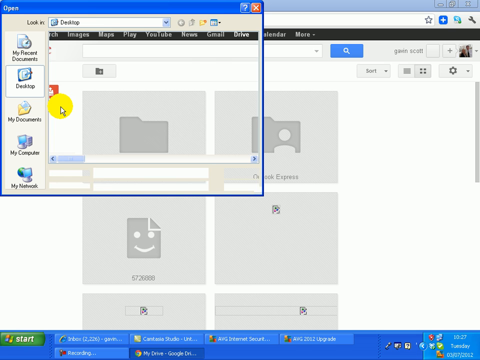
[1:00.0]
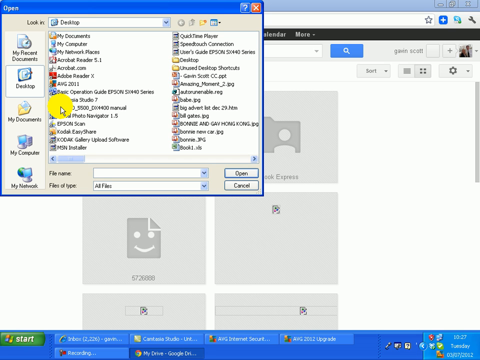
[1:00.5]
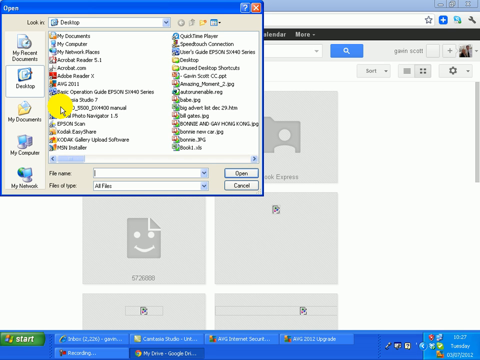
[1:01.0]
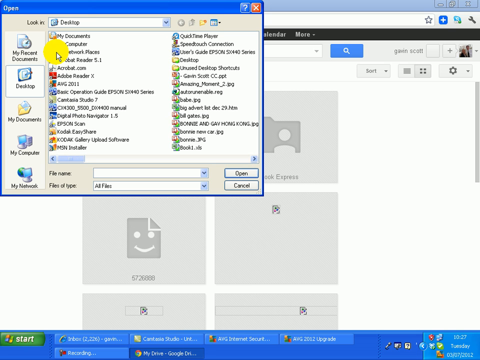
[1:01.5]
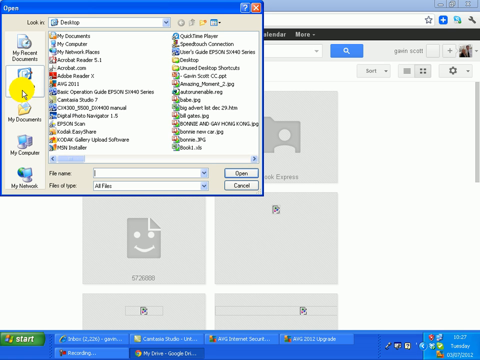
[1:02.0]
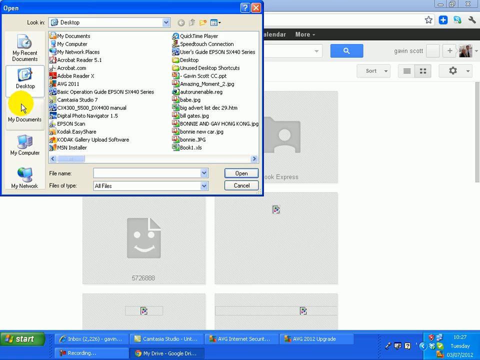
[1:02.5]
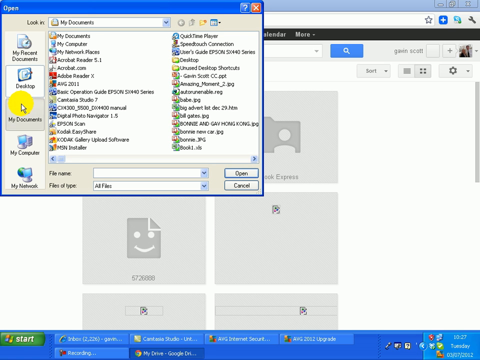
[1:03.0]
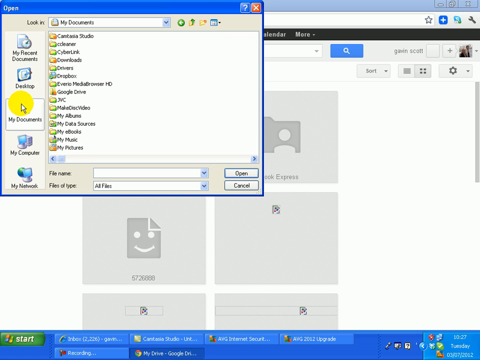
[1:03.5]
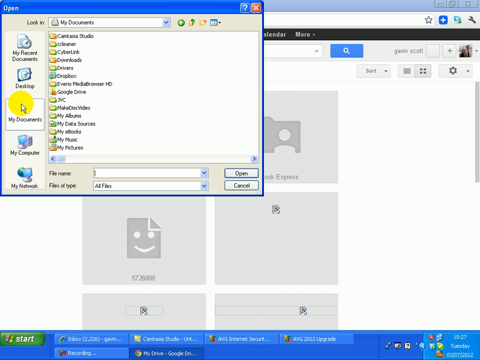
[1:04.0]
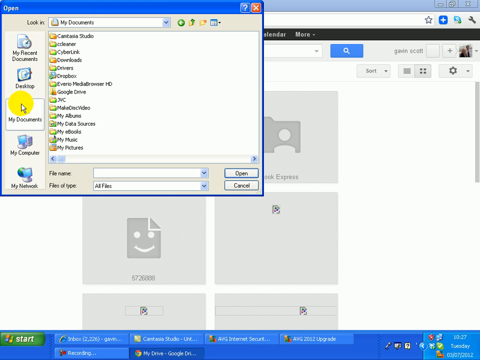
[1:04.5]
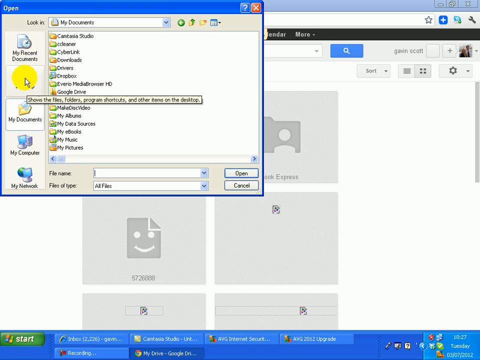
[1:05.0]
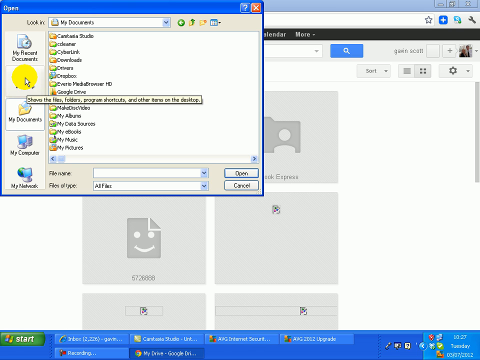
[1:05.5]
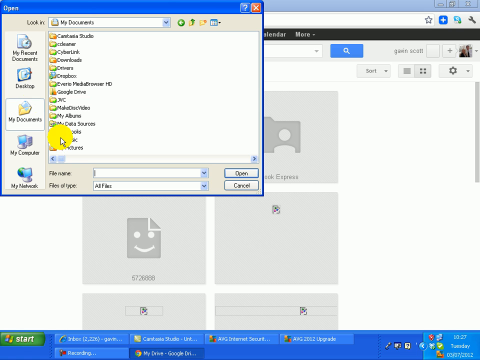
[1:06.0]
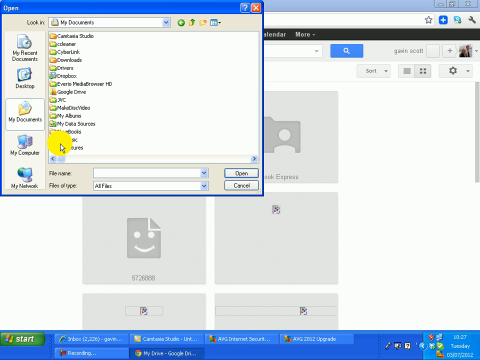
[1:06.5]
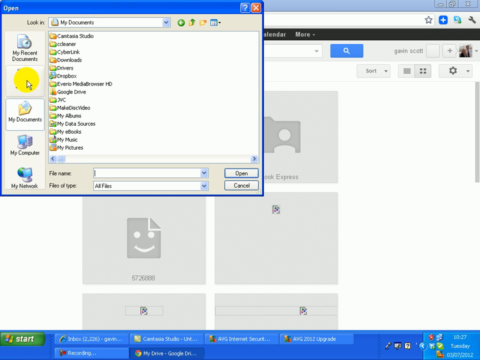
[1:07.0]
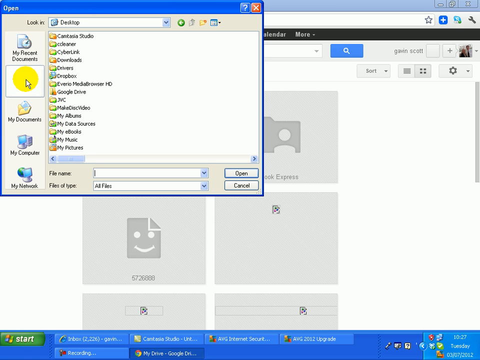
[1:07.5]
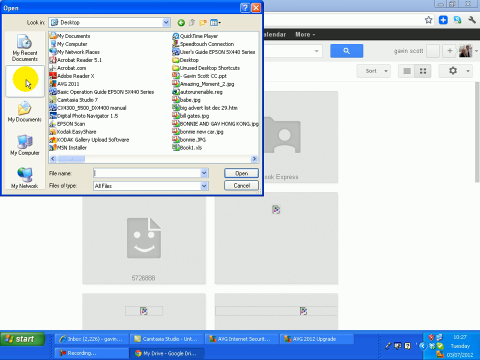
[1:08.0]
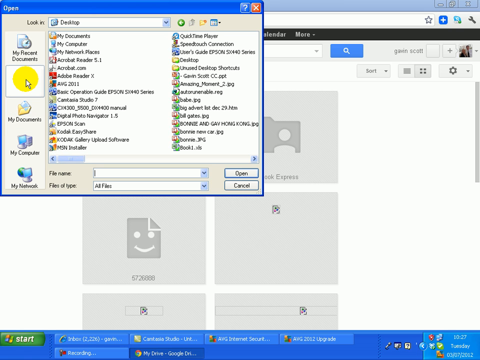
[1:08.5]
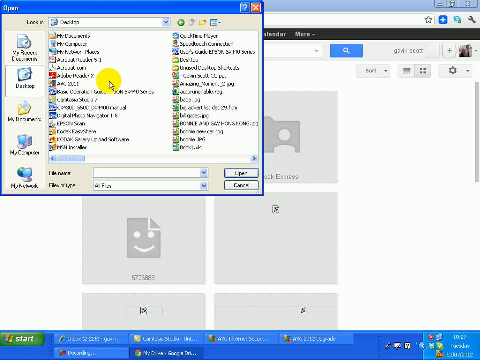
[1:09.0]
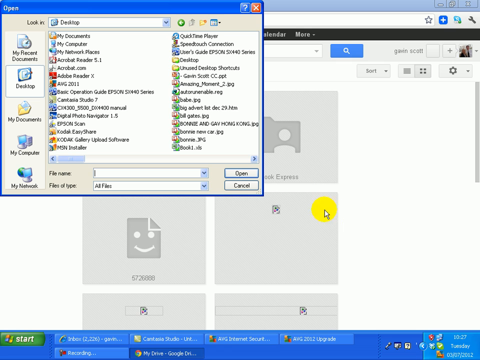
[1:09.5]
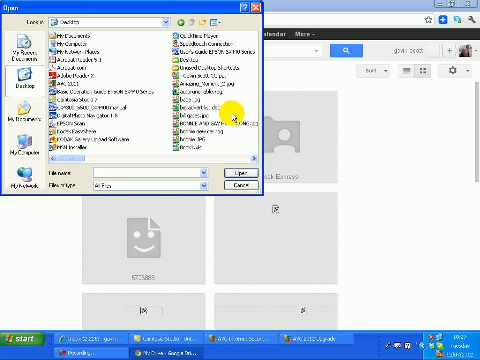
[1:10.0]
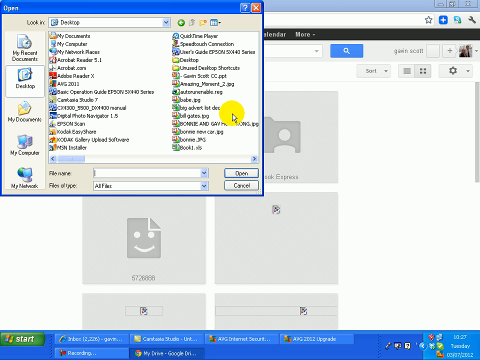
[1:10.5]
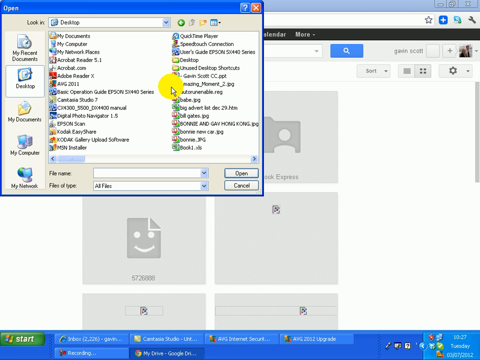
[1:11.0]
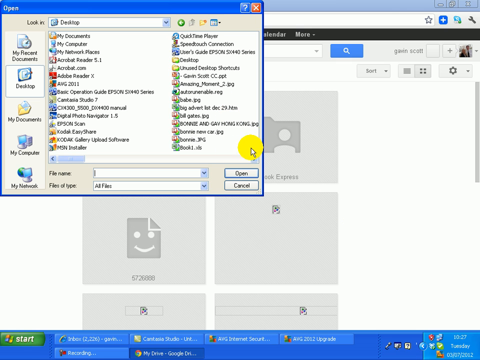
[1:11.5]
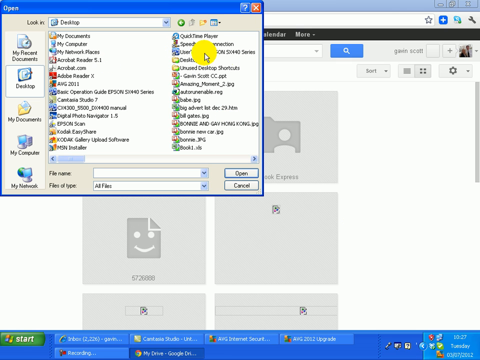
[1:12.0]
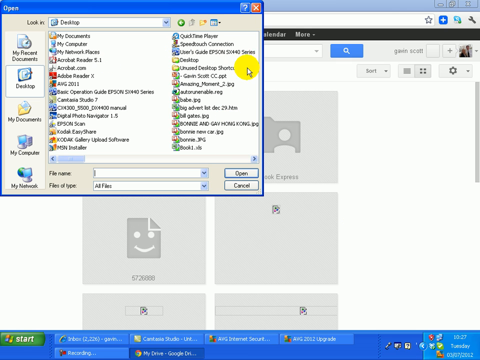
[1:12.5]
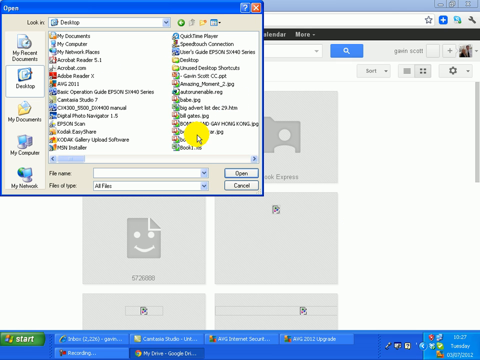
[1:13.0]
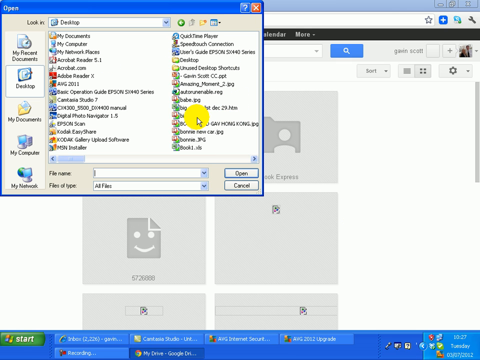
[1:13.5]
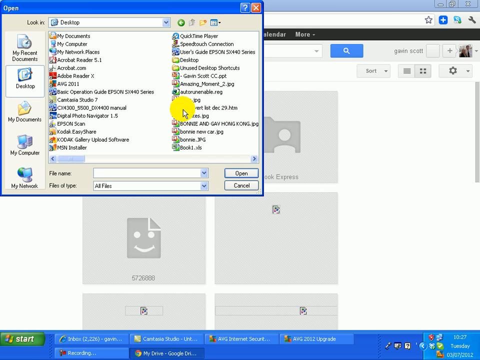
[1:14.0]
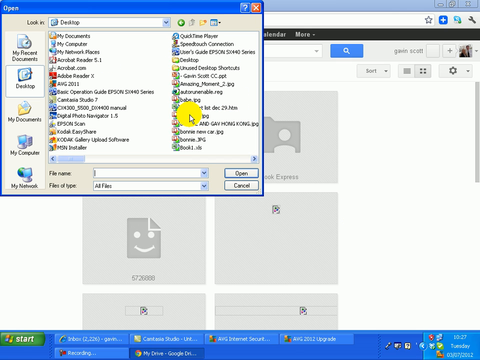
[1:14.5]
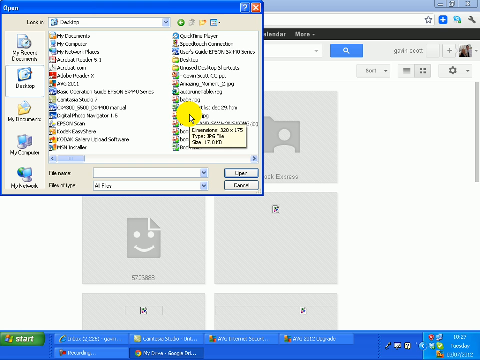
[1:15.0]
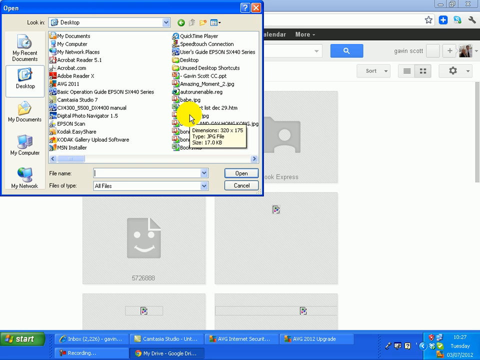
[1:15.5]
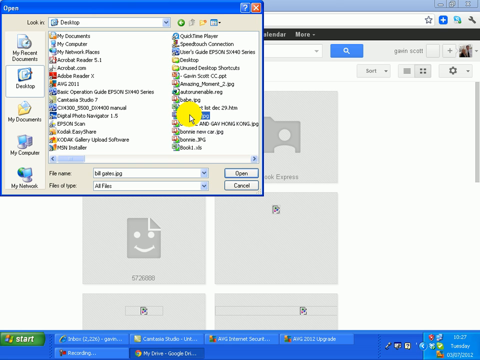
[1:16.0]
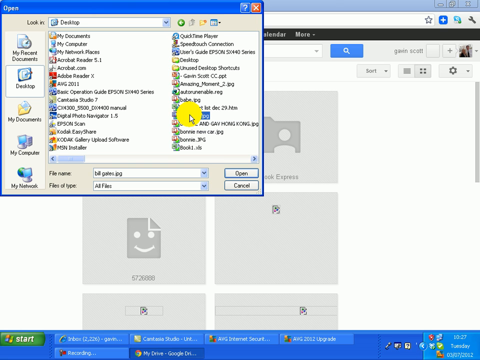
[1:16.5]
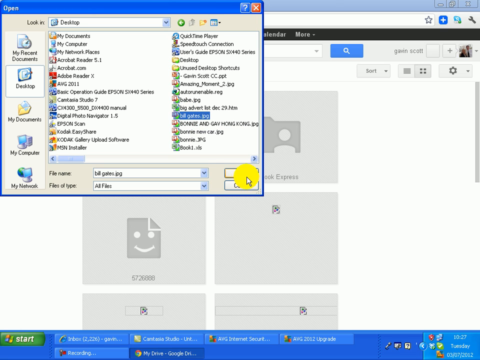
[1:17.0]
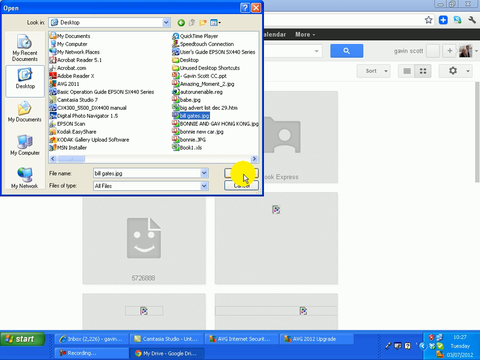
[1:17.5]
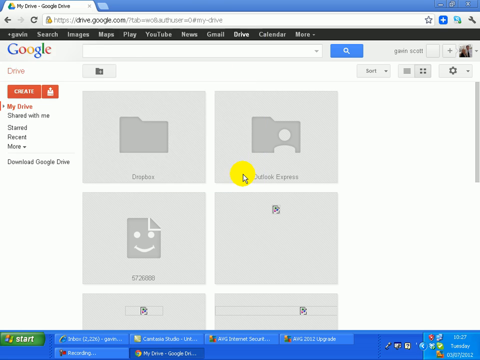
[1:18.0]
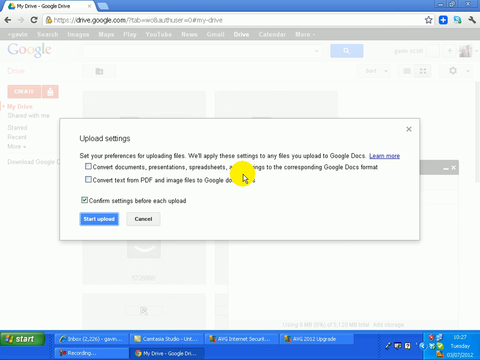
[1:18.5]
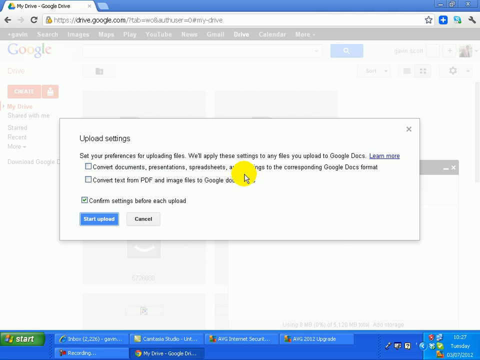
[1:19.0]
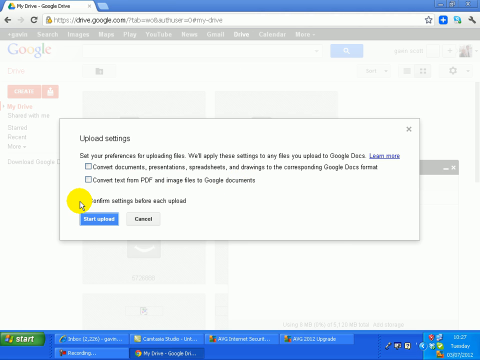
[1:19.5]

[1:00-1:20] In a tutorial about Google Drive, the man goes under My Documents, then clicks on desktop while still in the little dialogue box. He moves his cursor around, showing different things, clicks a button, then clicks on Start Upload, and clicks OK.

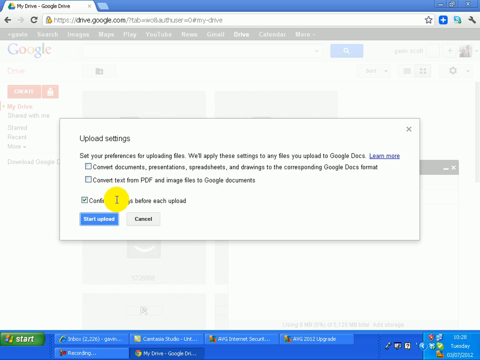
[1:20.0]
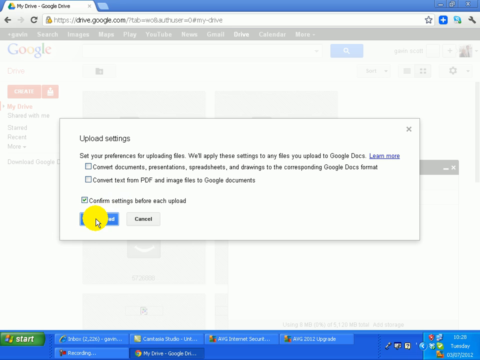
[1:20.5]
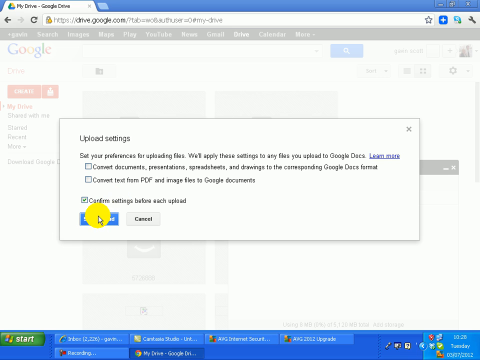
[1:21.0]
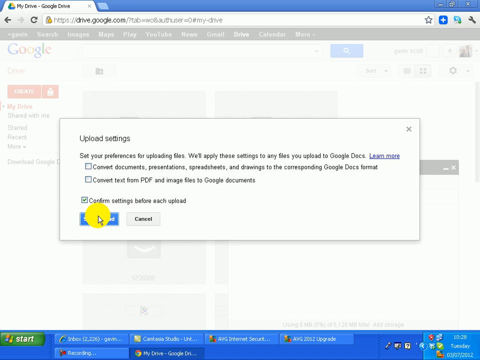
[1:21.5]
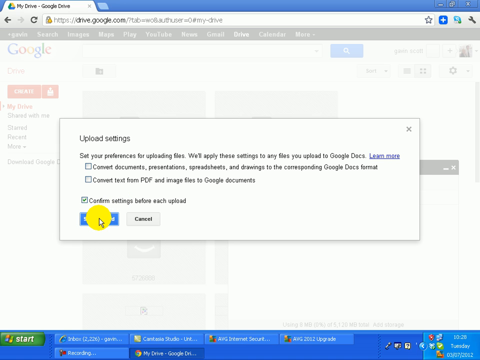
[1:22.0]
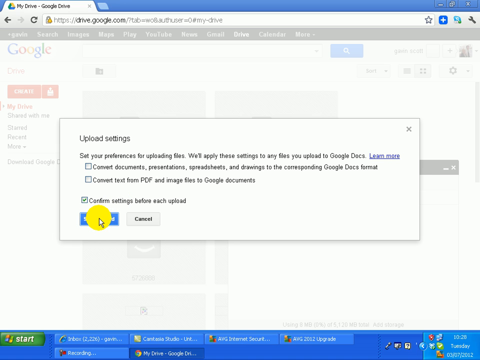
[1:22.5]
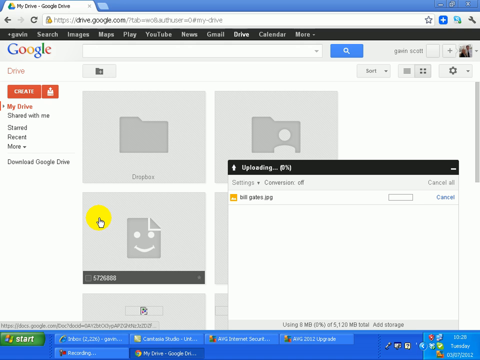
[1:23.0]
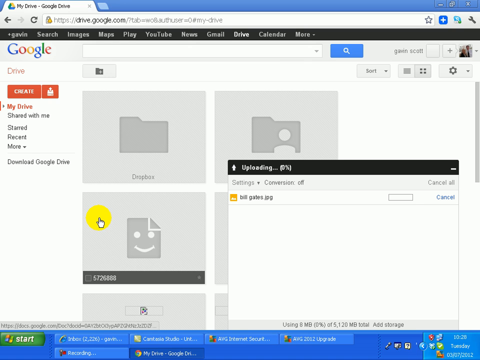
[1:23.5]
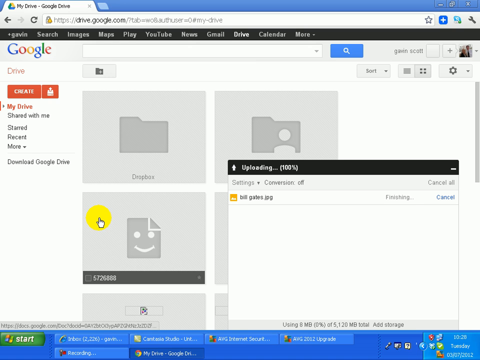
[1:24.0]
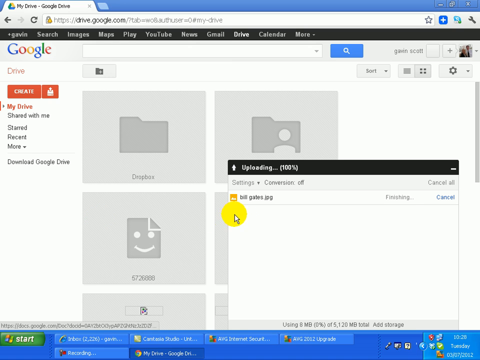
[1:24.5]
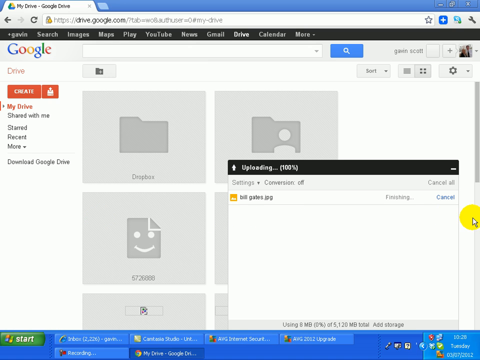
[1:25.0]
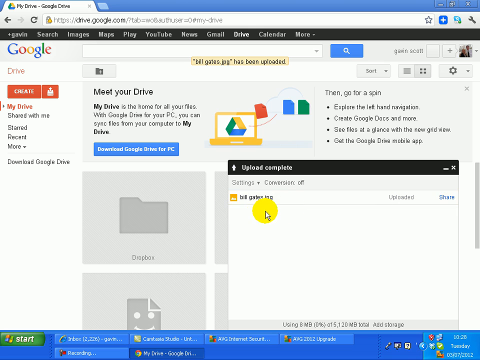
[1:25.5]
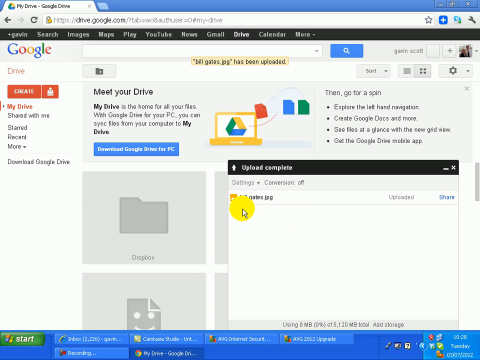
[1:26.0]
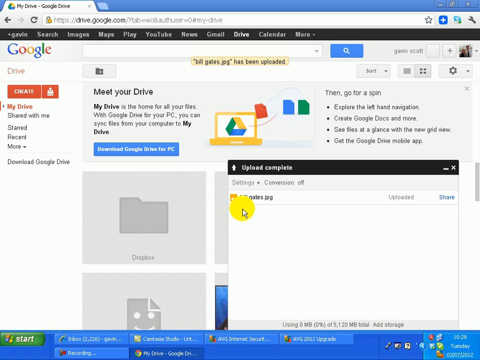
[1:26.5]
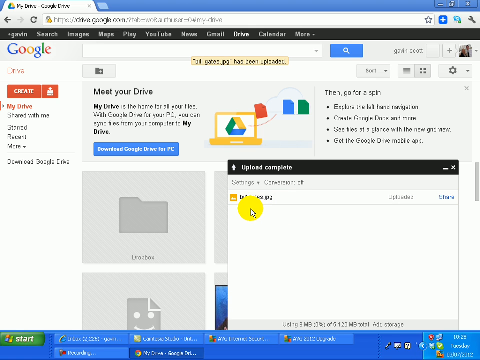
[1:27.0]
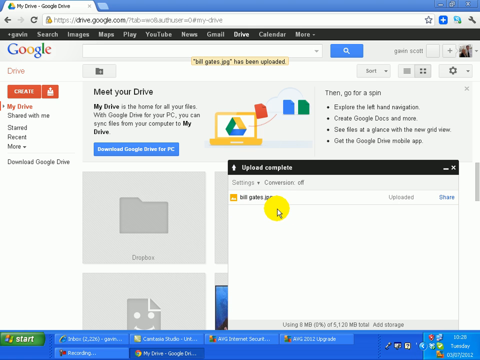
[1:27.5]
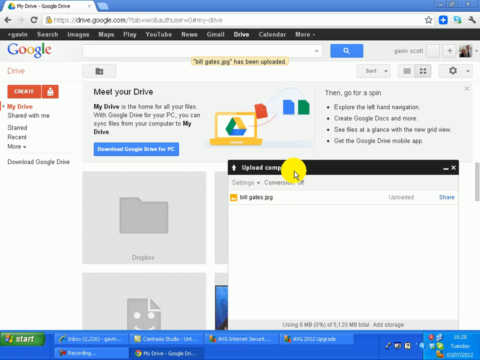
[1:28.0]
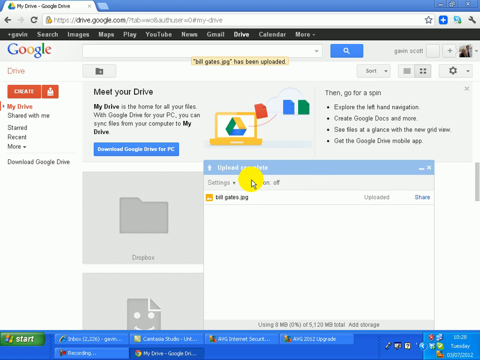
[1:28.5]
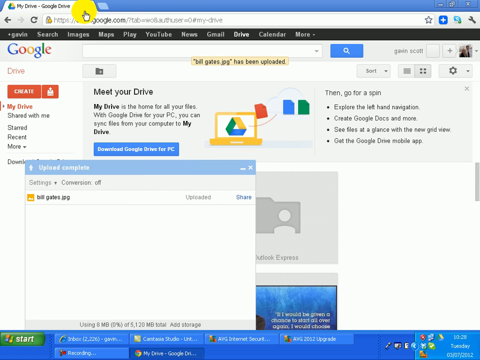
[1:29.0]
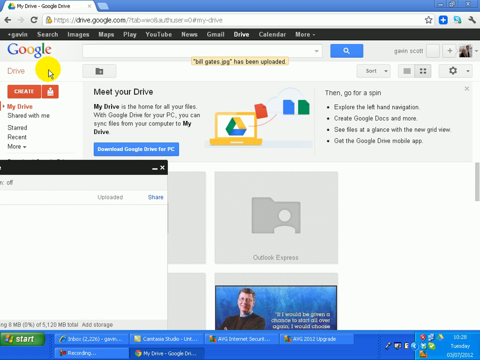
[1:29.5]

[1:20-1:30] The person clicks on their file and the screen says "upload complete", still on Google; "upload settings" also appears. They drag the little pop-up window over to the left. The Google page shows "Meet Your Drive" and "My Drive", along with items such as "Google device", "Create Google Docs" and more.